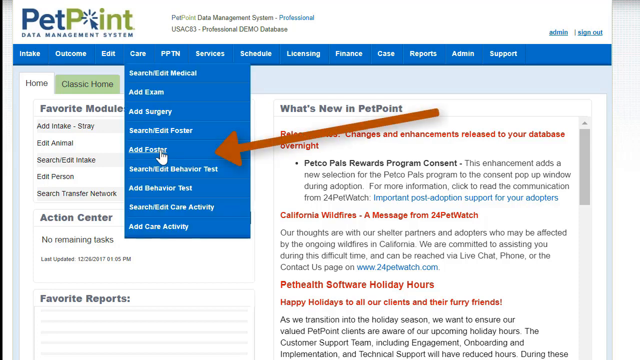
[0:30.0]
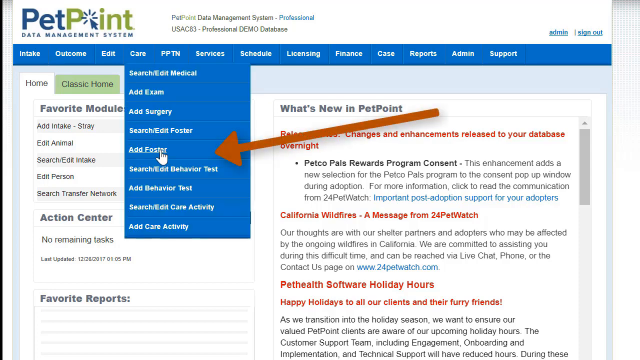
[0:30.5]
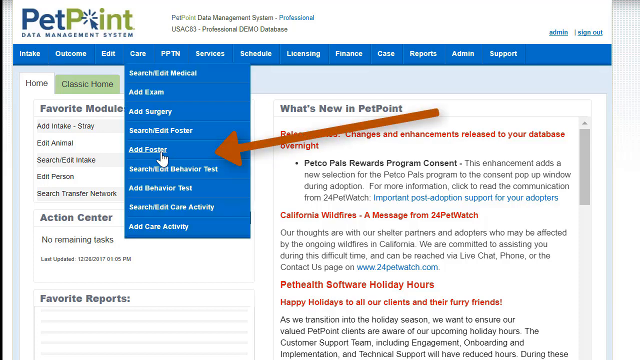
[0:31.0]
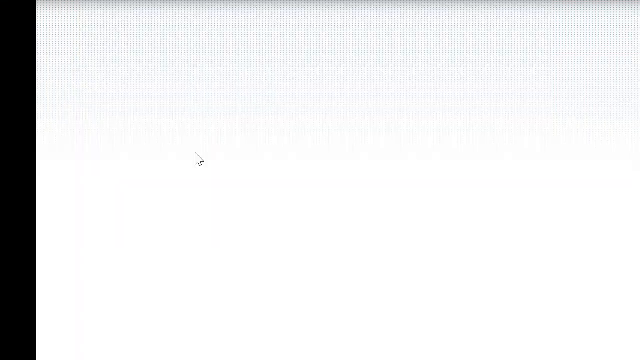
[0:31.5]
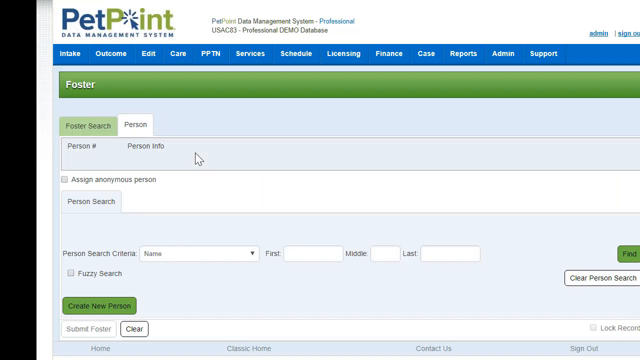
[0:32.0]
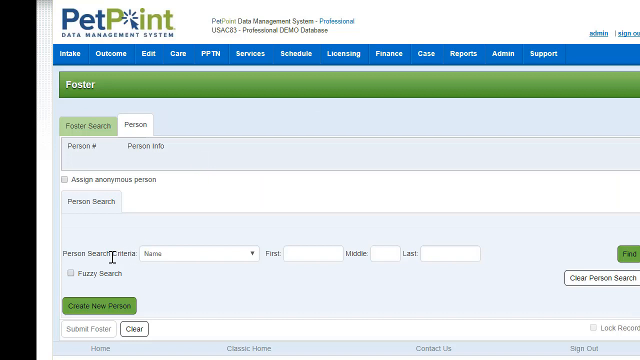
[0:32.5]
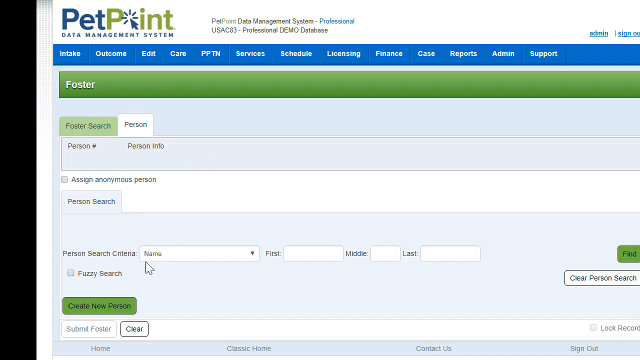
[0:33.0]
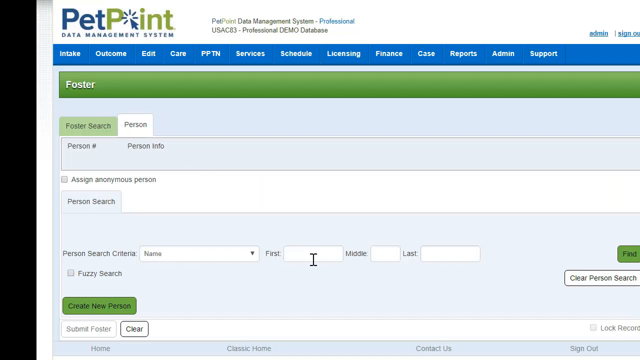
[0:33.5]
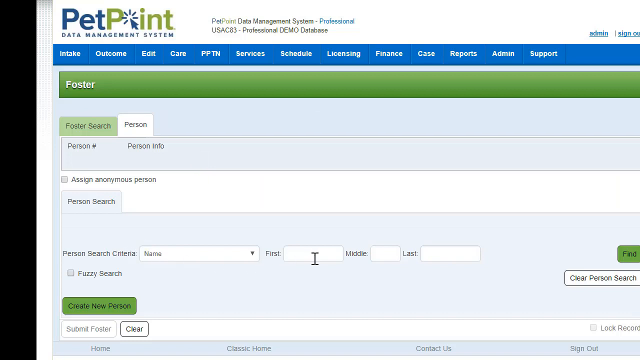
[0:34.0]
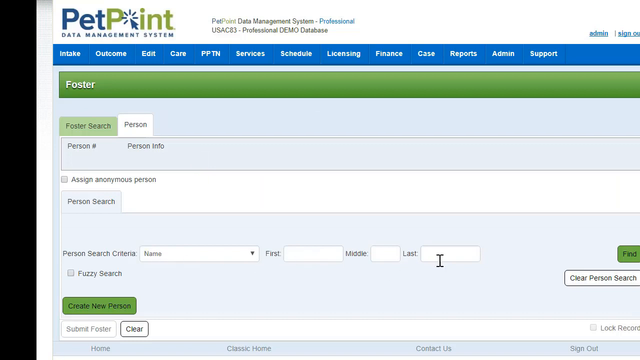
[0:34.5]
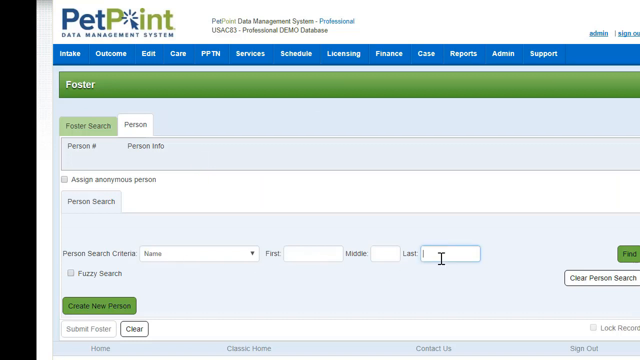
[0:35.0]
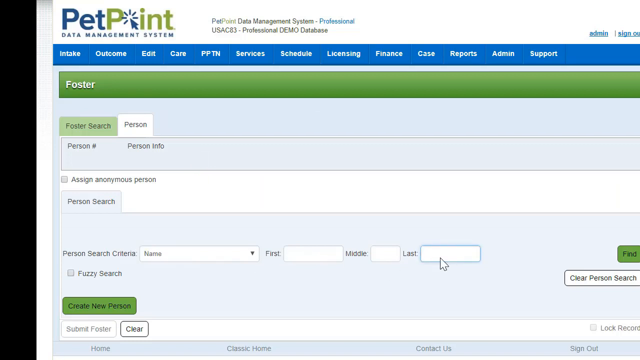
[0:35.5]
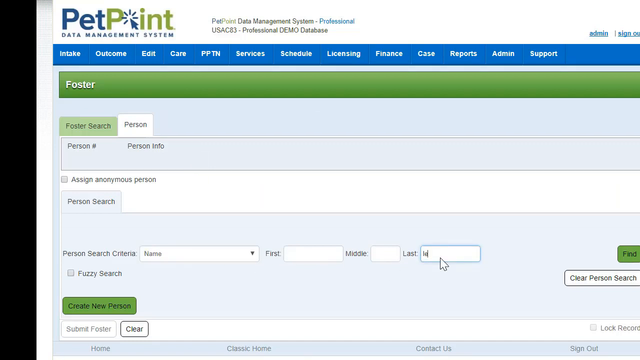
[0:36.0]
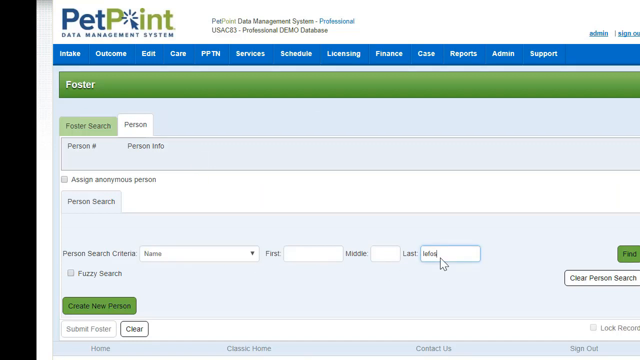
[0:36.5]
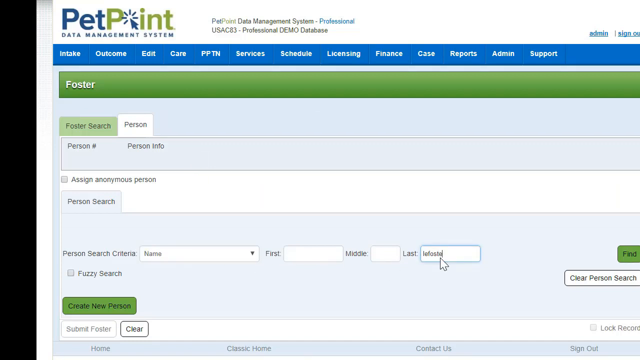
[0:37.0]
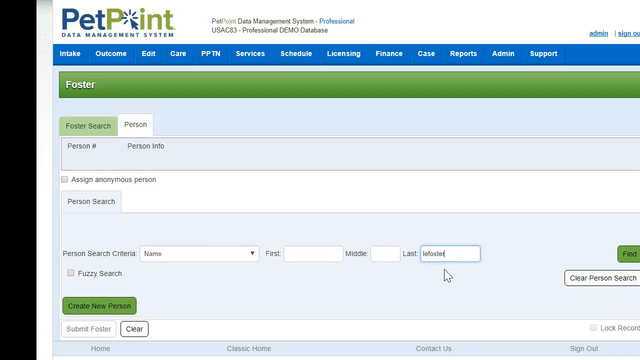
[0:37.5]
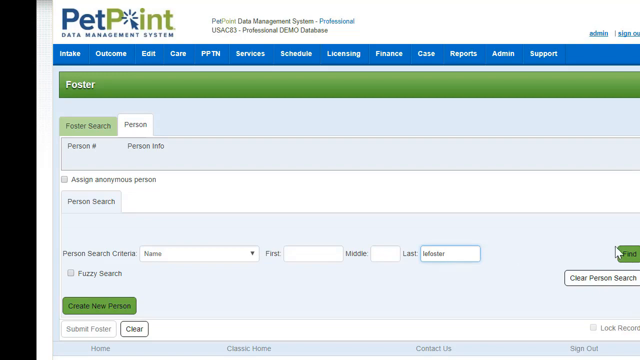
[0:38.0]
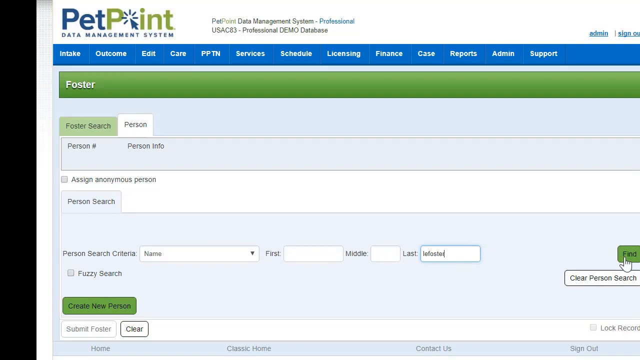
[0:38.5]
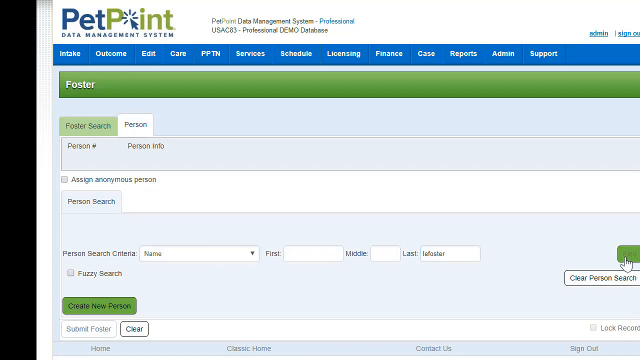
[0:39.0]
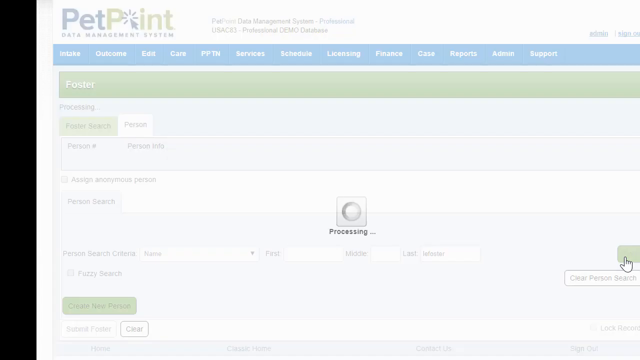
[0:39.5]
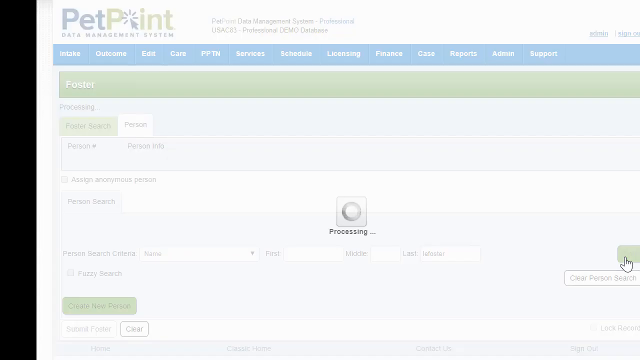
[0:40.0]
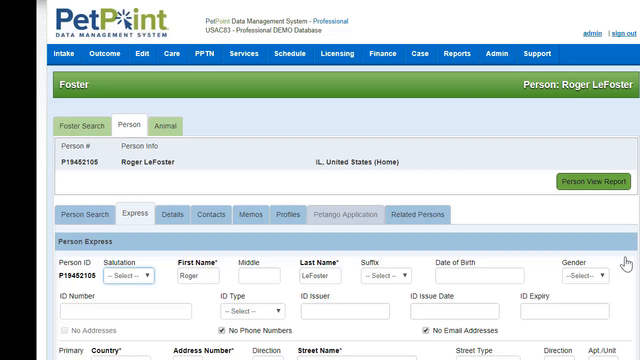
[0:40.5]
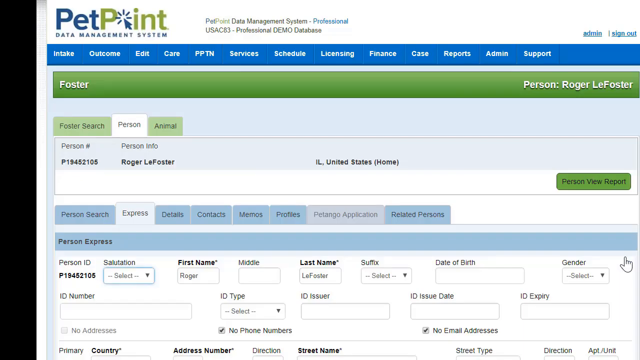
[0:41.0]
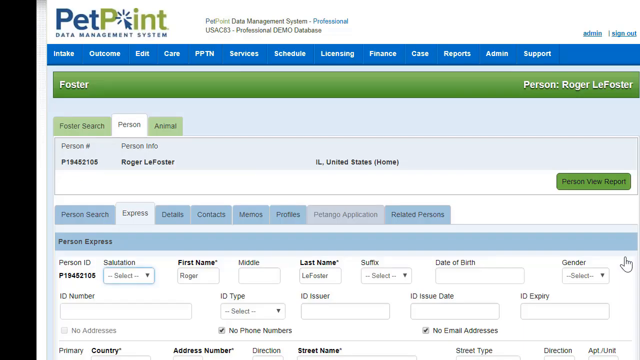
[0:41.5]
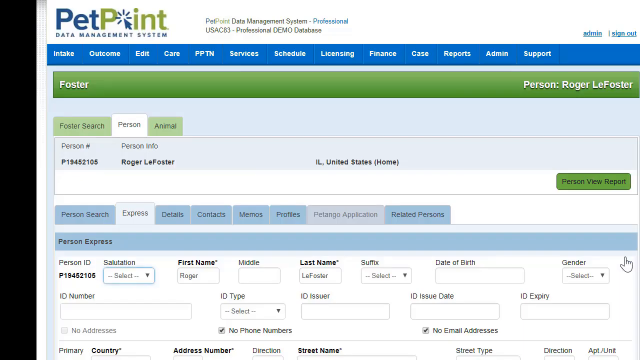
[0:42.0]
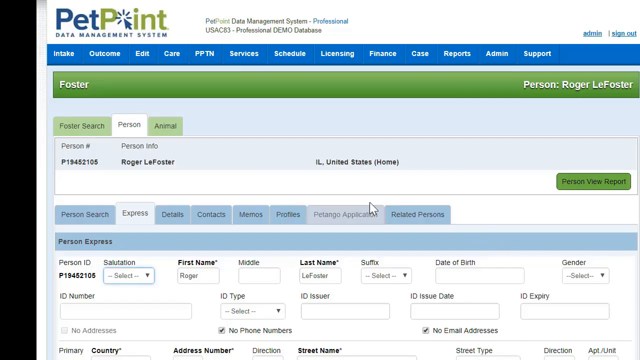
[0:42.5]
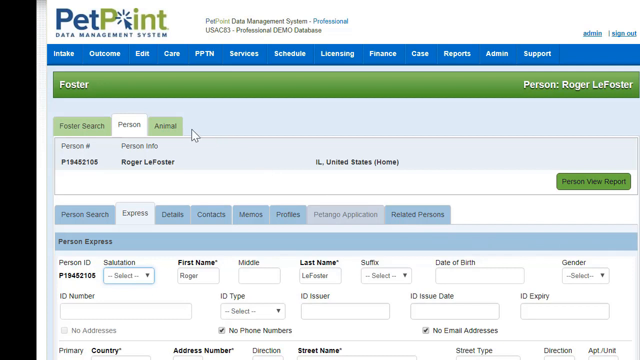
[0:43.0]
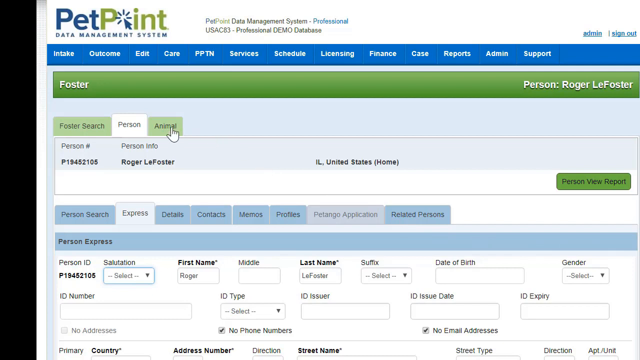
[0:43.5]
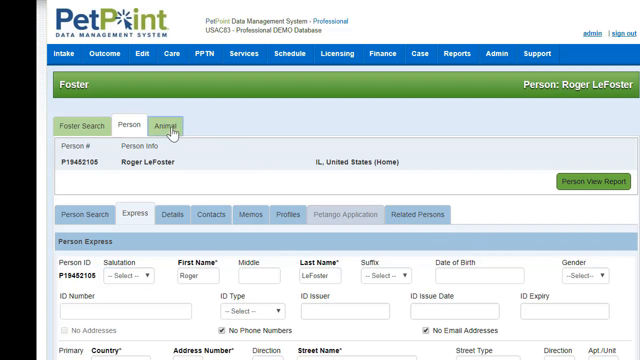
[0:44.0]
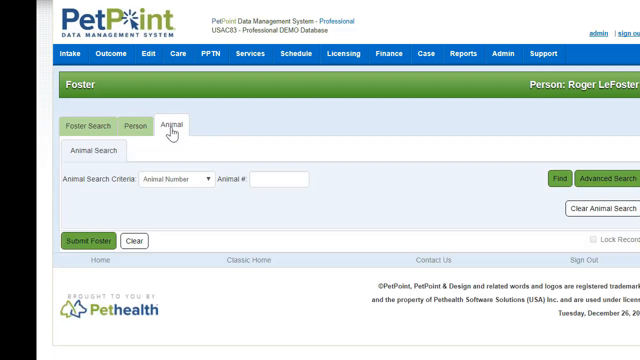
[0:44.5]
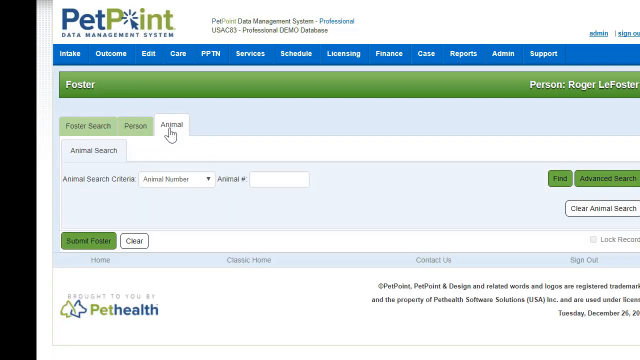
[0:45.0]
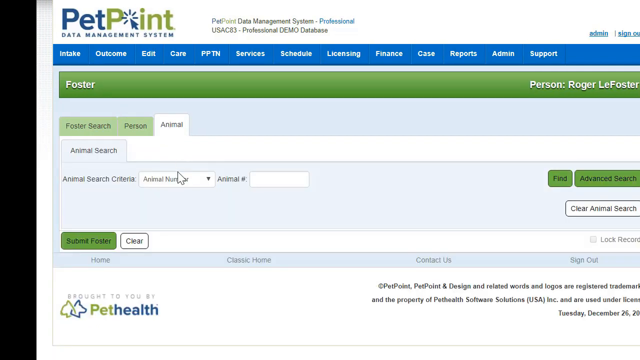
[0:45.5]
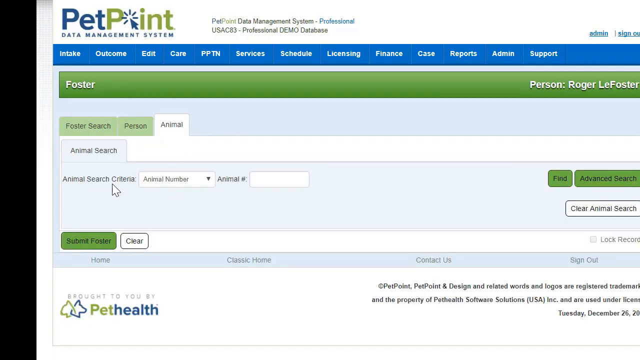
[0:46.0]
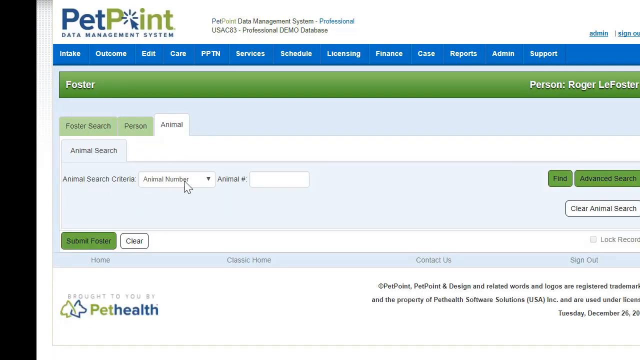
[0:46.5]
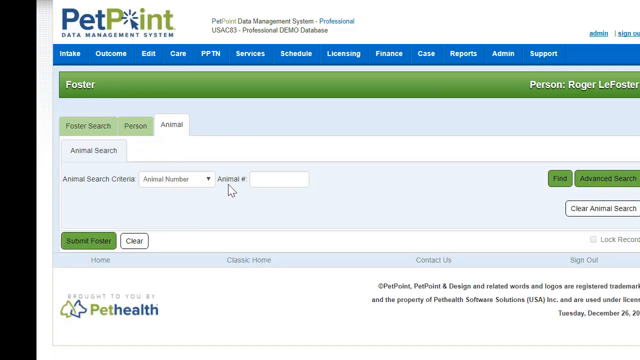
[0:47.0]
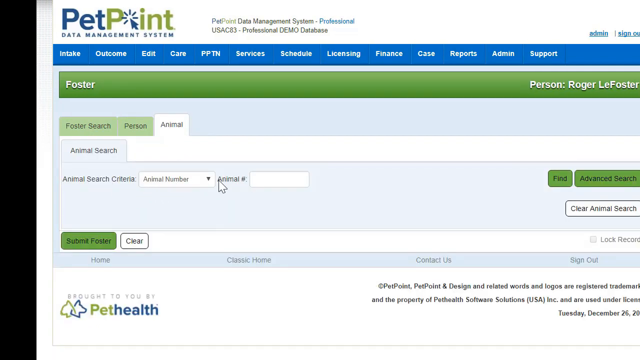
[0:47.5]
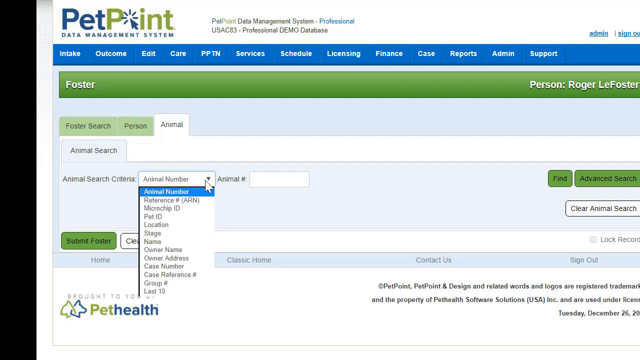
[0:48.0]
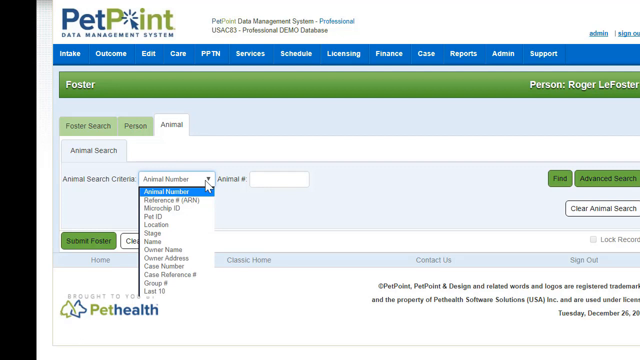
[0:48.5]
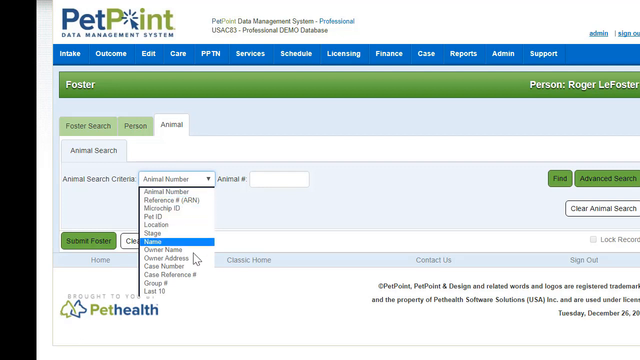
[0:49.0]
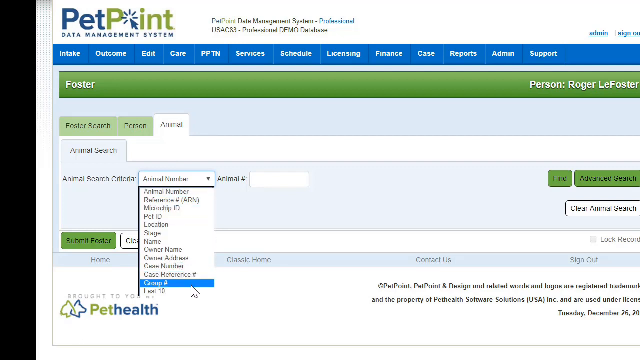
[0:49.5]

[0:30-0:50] The PetPoint website is open to its home page with the drop-down menu under the Care option in the top navigation menu showing and a large red arrow pointing to the Add Foster option. The cursor clicks that option, which opens the foster page. There are two tabs at the top, one reading "foster search" and the other "person," and the person tab seems to be the one open. At the bottom are text input boxes for typing a name into the person search criteria. The cursor clicks into the last name box, the user types the last name "LeFoster," and then clicks the Find button. A small processing loading icon appears while the screen is grayed out, and then the result appears, showing the person's ID number, the name Roger LeFoster, and the location Illinois, United States. The user then clicks the animal tab at the top of the screen, which brings up the animal panel where animals can be searched by animal number, microchip ID, pet ID, location, or a large list of other options in a drop-down menu.